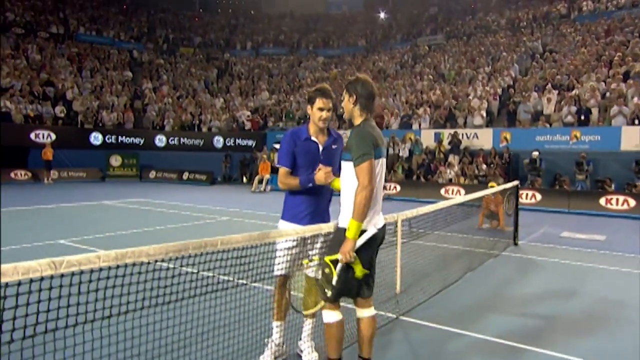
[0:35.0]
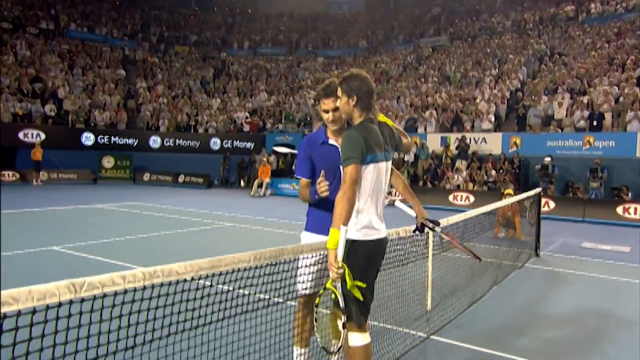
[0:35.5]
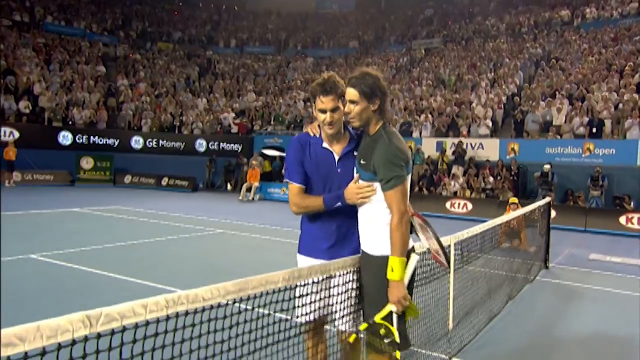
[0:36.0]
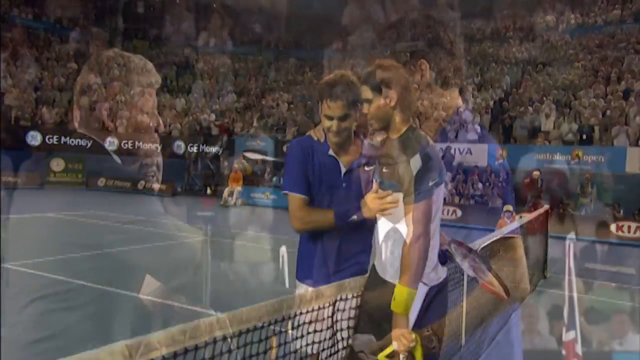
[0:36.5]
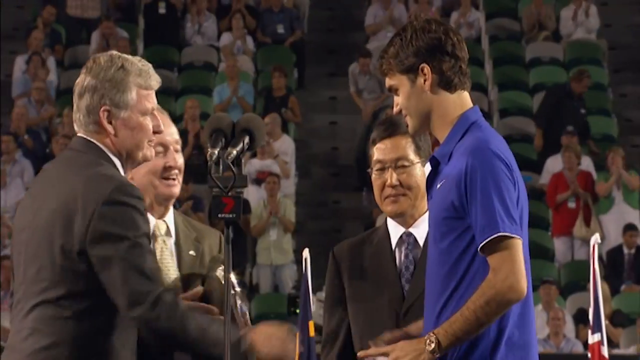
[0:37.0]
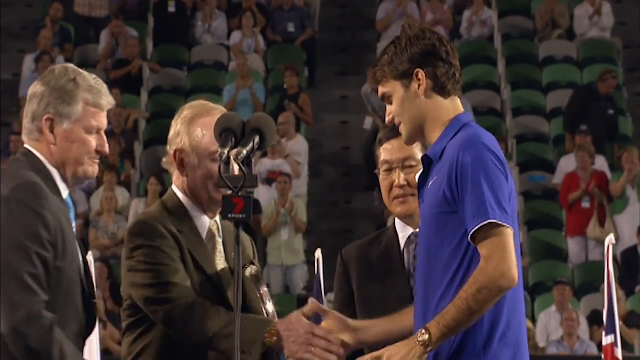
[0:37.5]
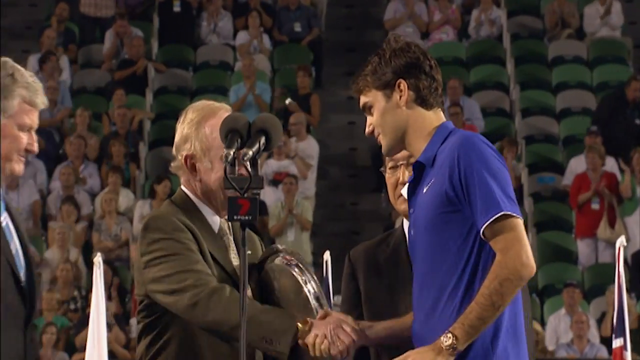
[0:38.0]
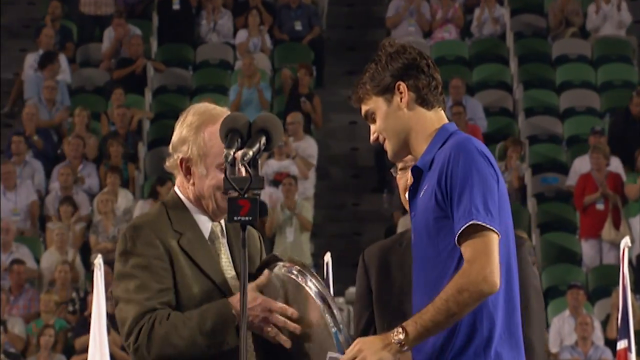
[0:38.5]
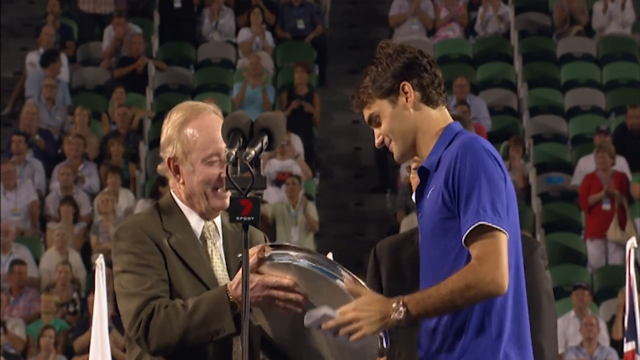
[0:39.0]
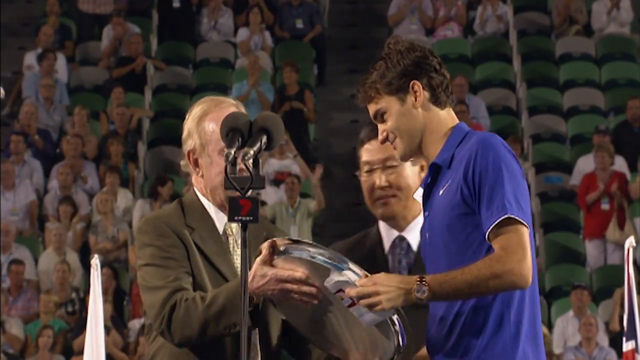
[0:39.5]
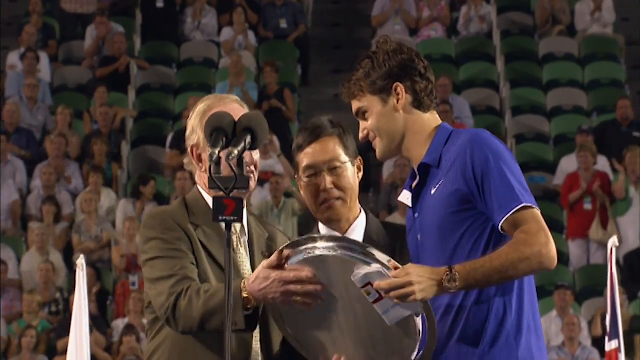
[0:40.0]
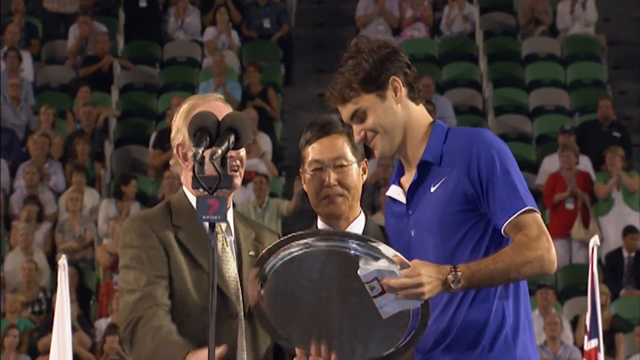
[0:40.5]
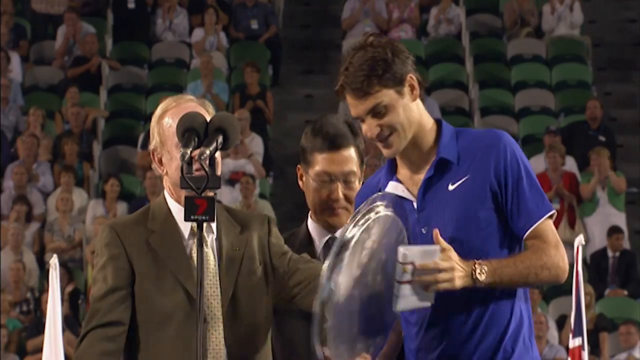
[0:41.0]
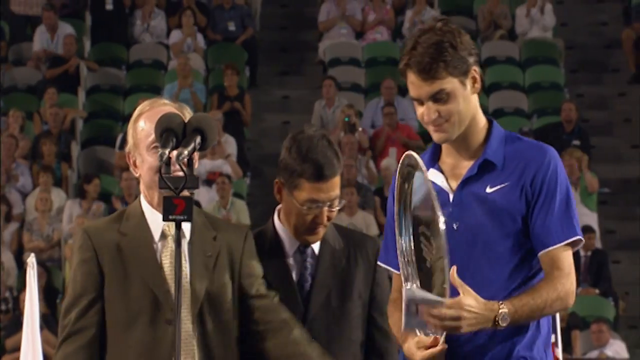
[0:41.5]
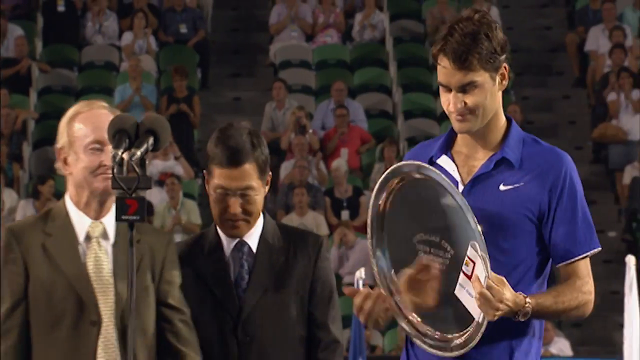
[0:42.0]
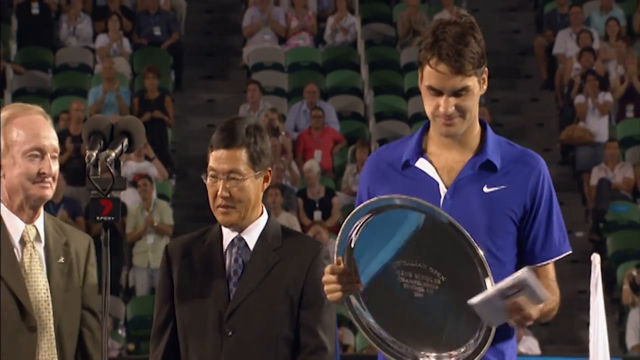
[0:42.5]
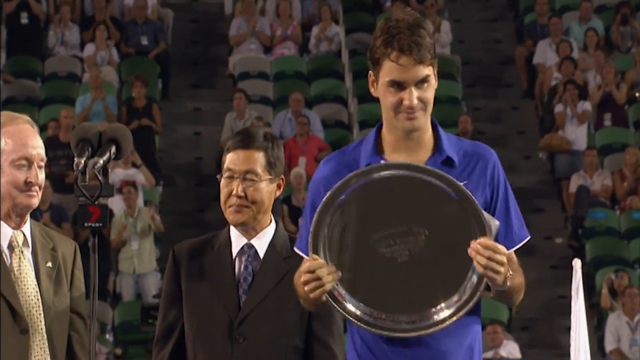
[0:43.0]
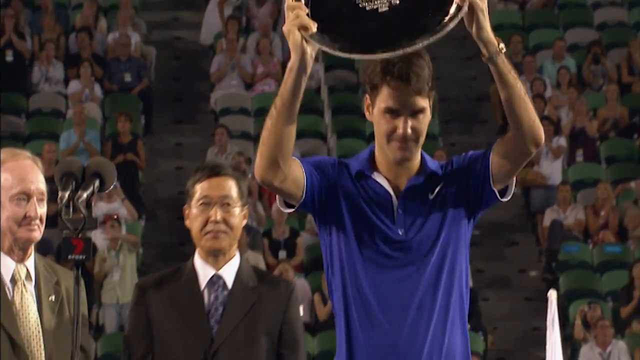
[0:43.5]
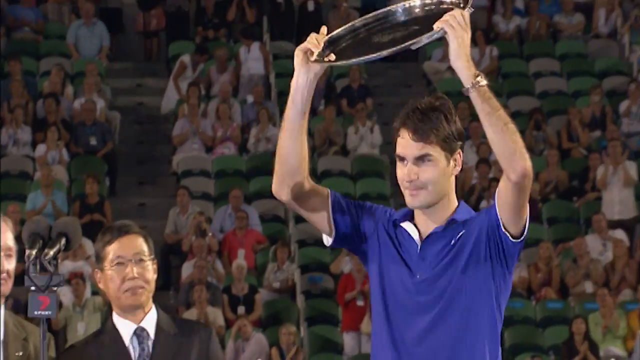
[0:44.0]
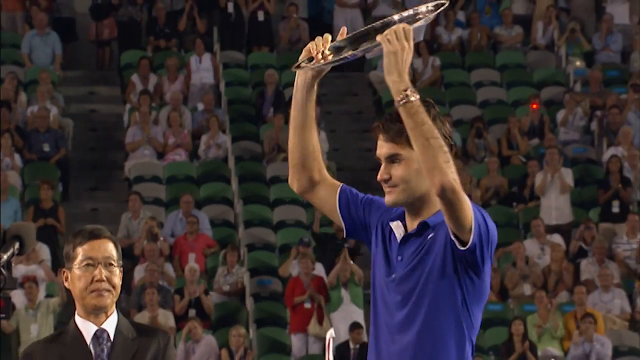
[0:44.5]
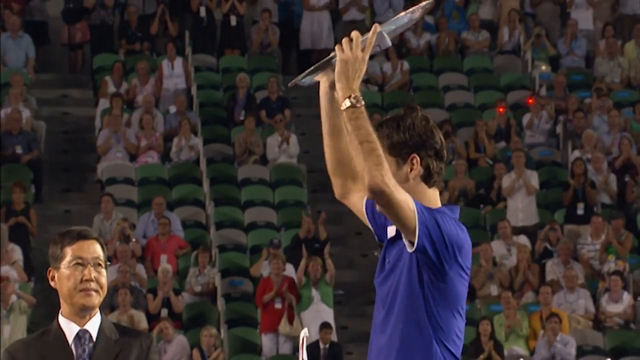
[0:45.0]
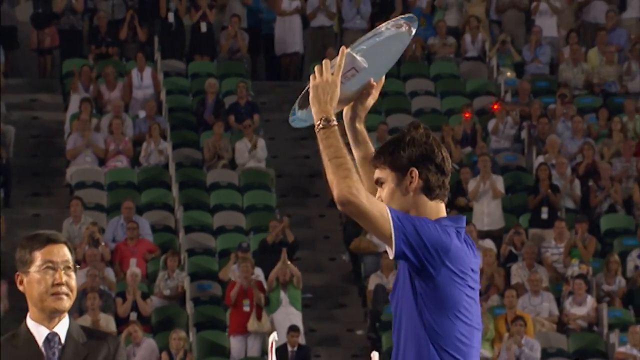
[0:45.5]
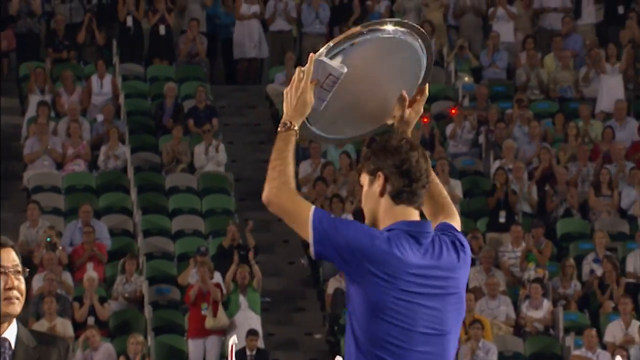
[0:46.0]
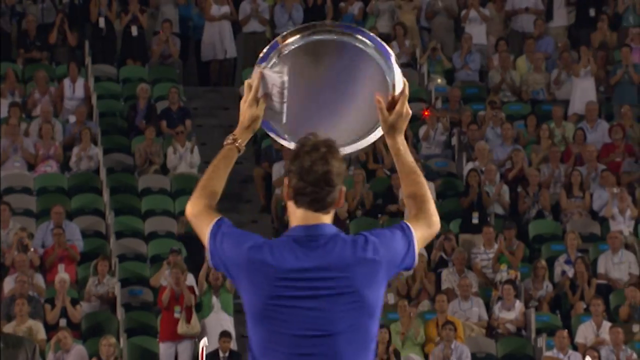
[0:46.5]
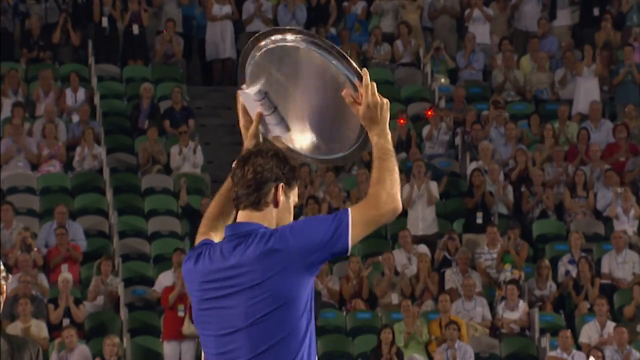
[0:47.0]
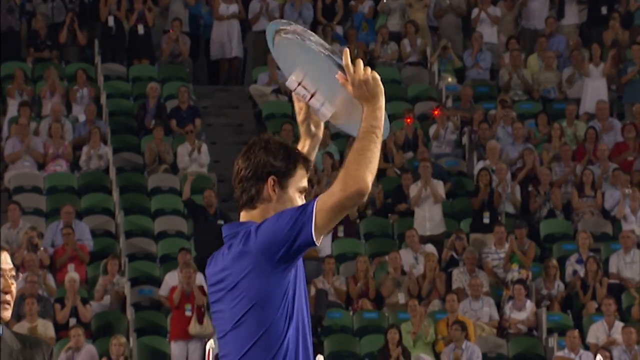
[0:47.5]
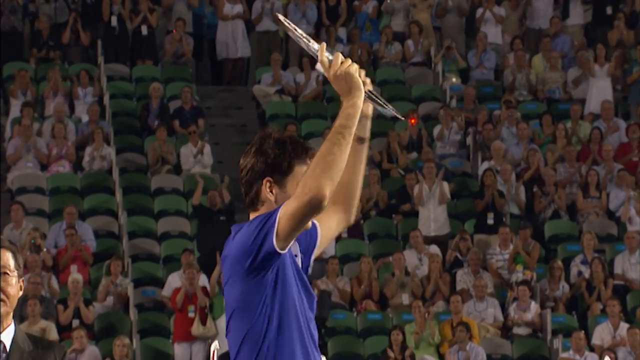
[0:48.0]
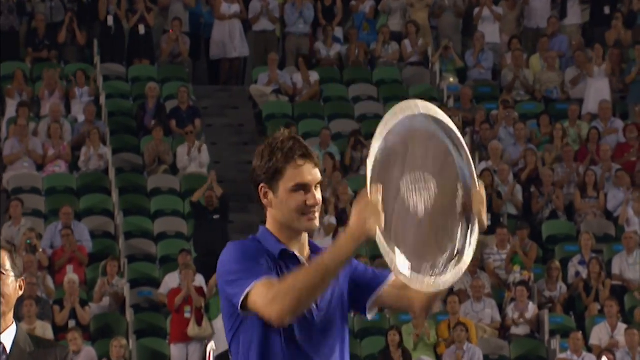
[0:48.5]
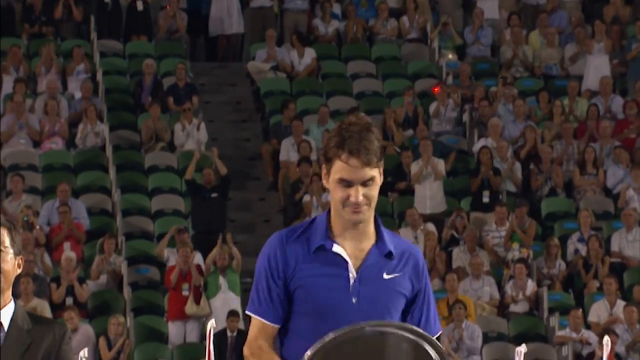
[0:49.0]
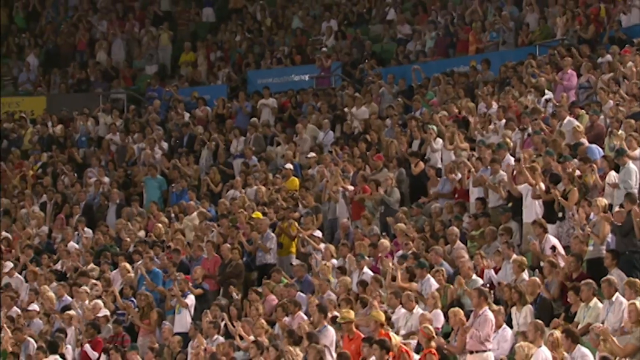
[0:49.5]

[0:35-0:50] The players meet in the middle and the game is finished. Managers in the center give a circular silver trophy to the player in blue, who wears a Nike golf shirt. He raises the trophy up high, smiling, while the fans cheer and clap. In front of him is a mic stand with two mics, and the managers are on his left. He holds a white paper in his left hand. The chairs of the venue are blue and green, and the fans mostly wear white, with some in other colors.